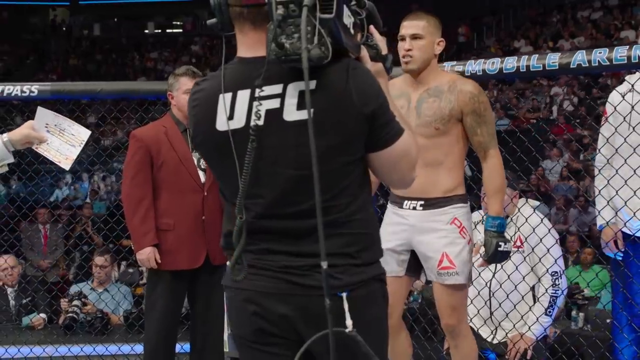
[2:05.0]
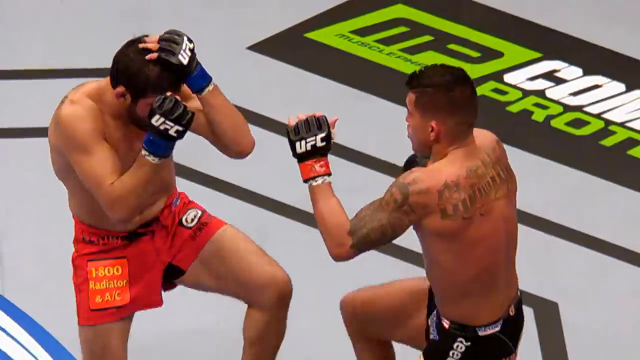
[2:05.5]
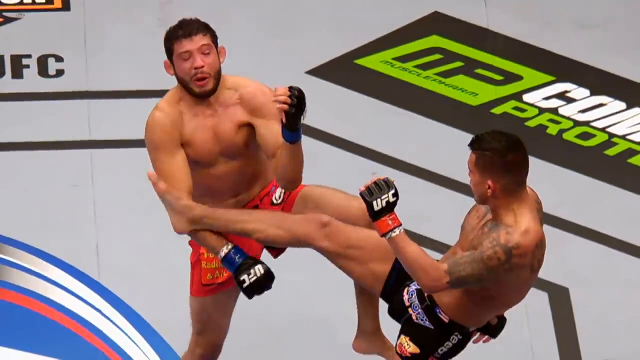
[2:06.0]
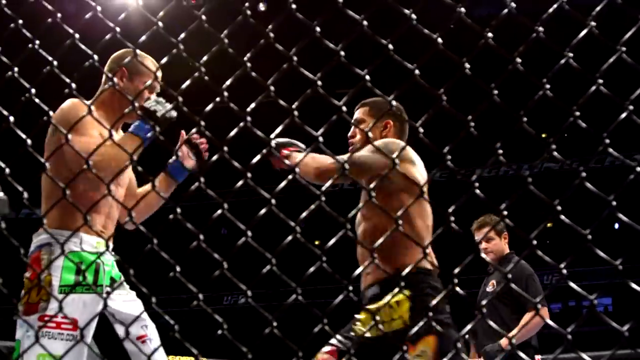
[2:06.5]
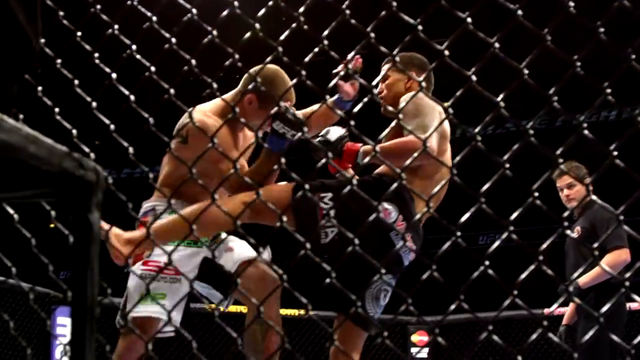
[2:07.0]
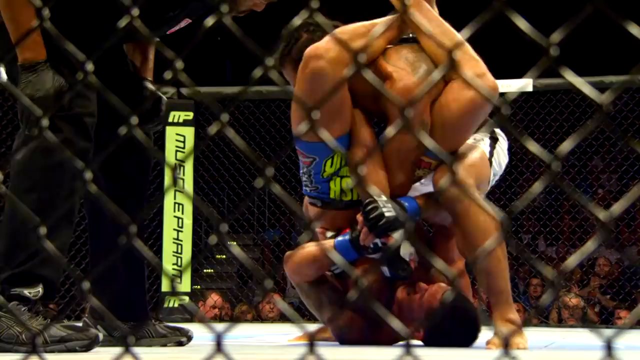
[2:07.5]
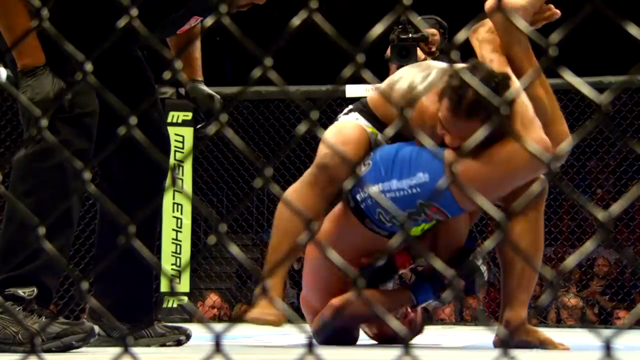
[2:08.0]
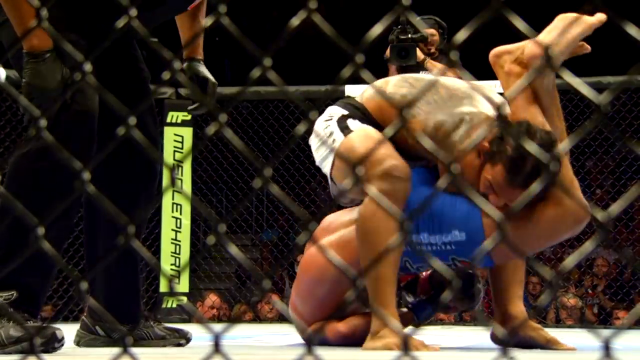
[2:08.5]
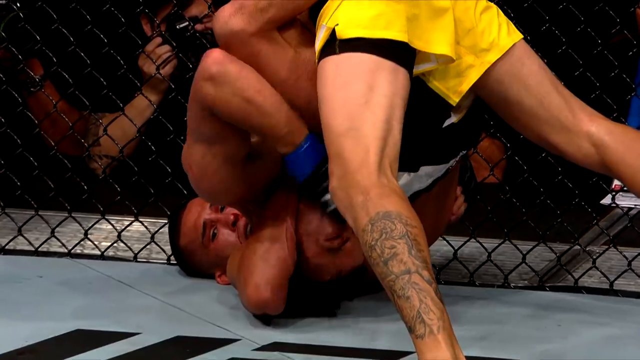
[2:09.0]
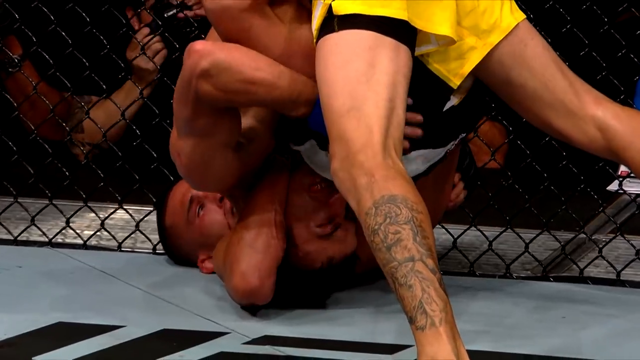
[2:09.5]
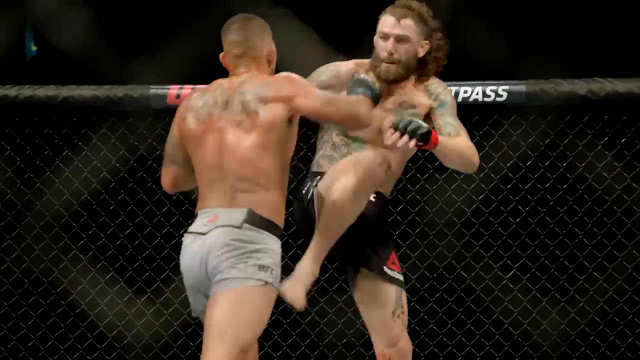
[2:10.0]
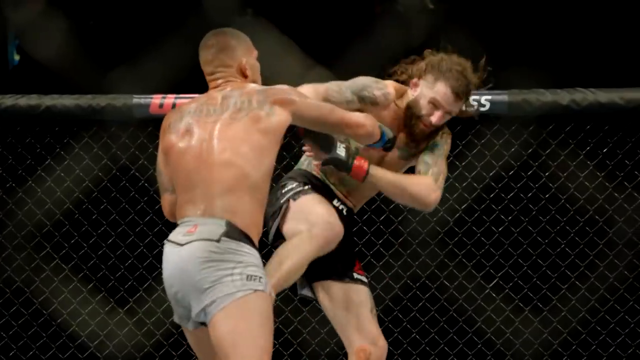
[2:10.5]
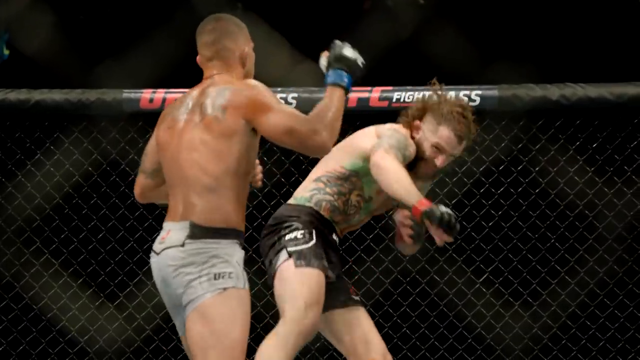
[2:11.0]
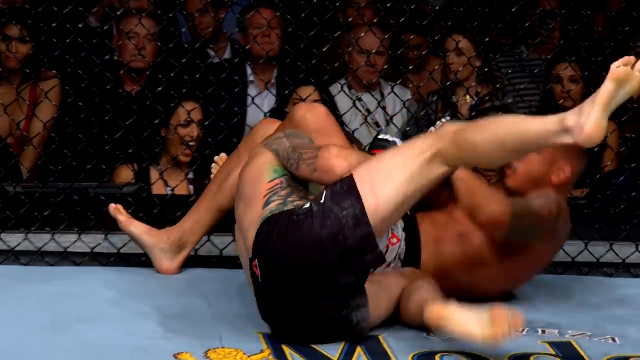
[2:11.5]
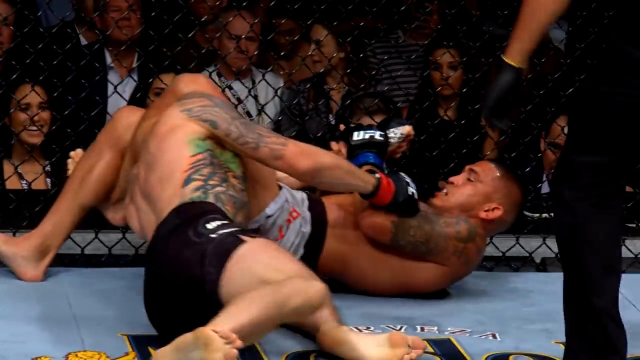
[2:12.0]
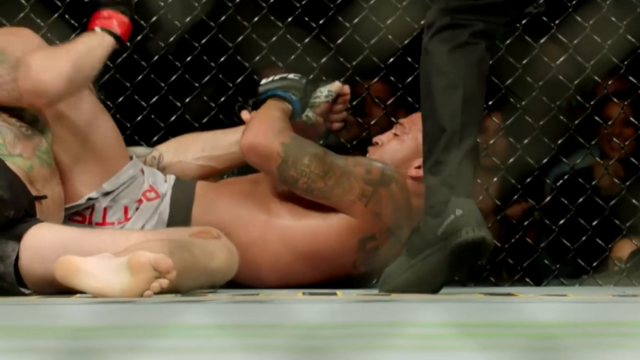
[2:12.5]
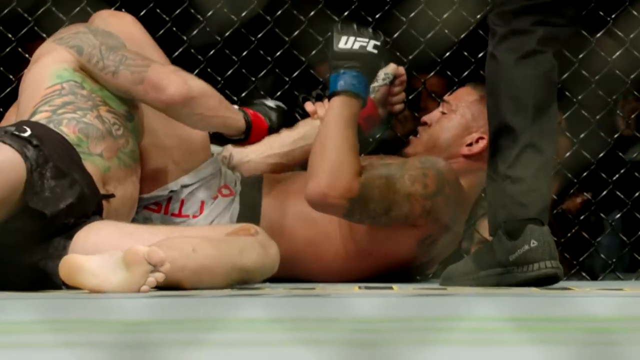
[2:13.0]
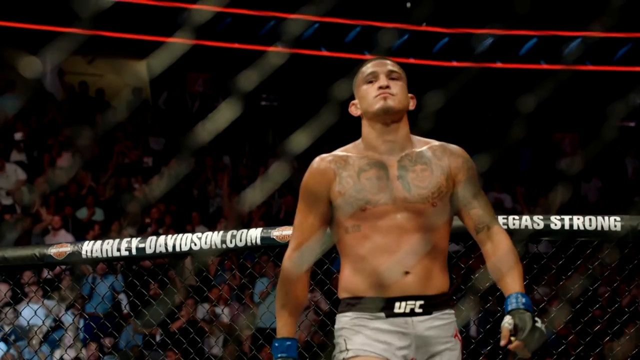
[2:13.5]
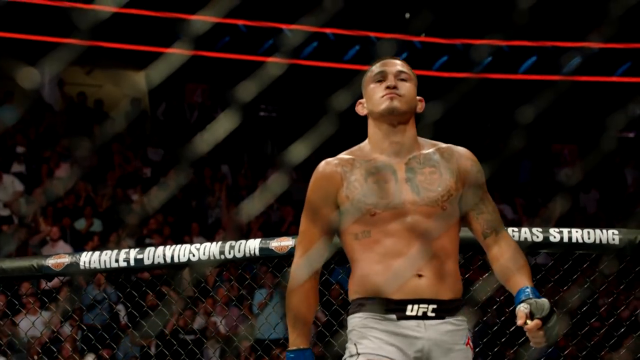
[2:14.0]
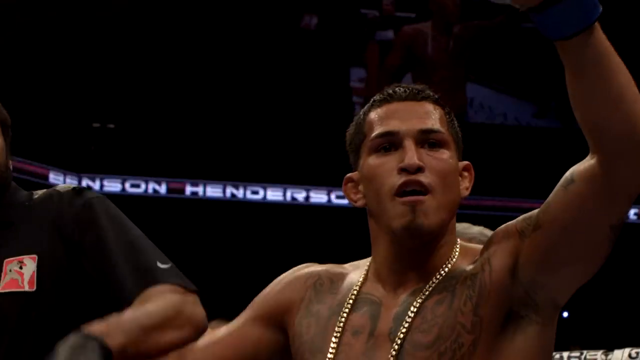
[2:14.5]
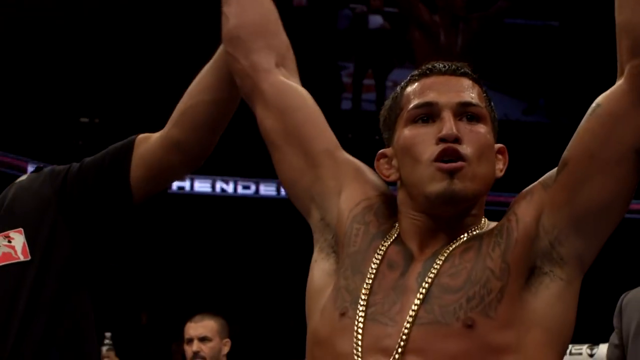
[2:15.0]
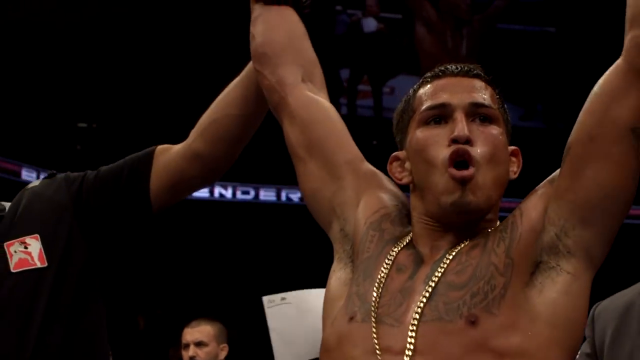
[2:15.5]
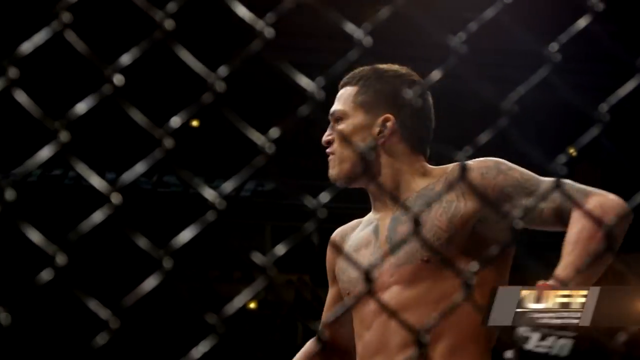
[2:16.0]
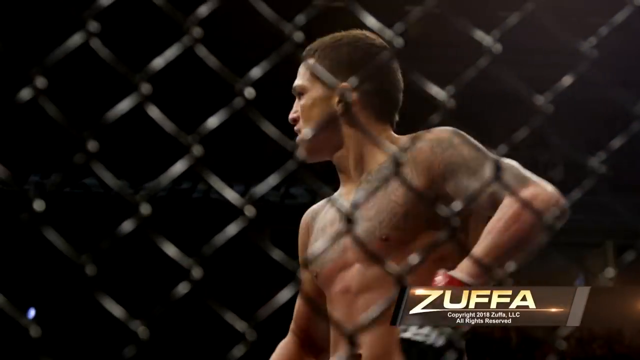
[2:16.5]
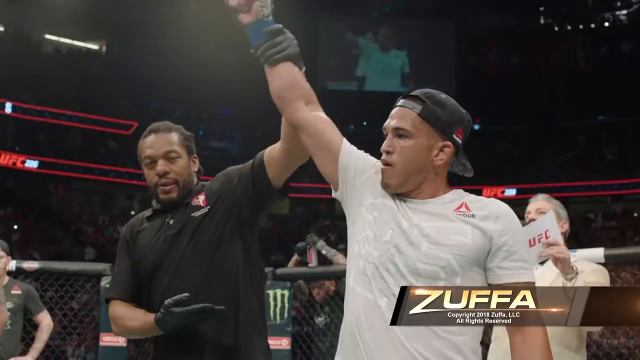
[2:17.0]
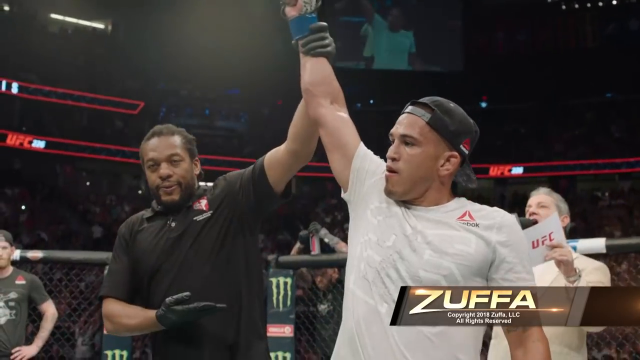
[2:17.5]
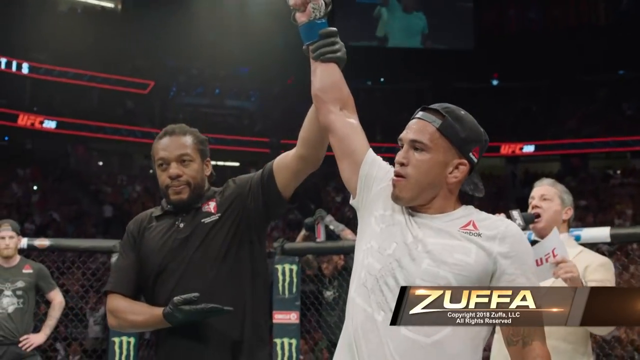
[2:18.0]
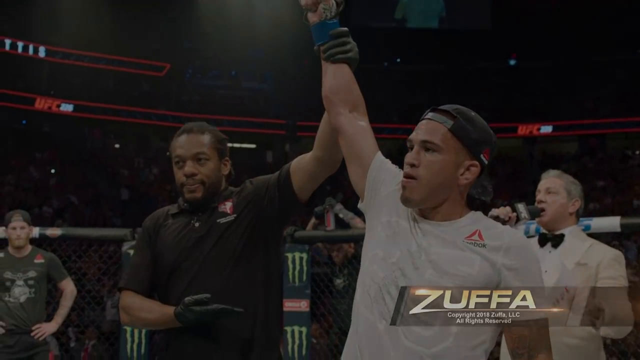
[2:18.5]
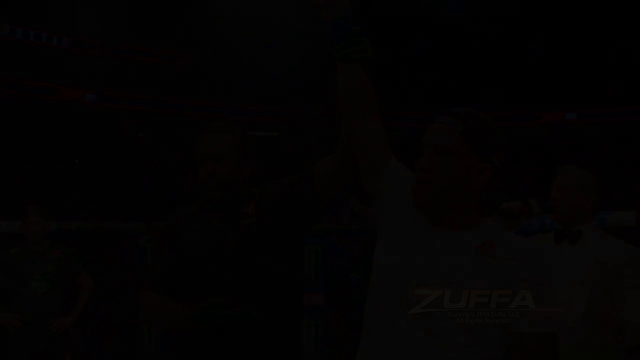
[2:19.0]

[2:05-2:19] Two UFC fighters jump around in a ring, followed by many rapid clips of a promotional video for a UFC fight, Ferguson vs Petits. Shirtless Latino men in tiny shorts kick and punch each other and grapple on the ground. Many different UFC fighters appear, muscular men of about 20 to 30, most with tattoos, wearing short shorts of many different colors and knuckle gloves. Referees repeatedly lift the arms of winners. Mostly the footage shows the same two Latino-looking men kicking and punching.